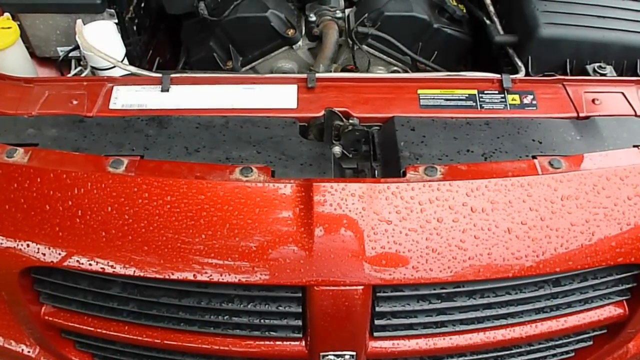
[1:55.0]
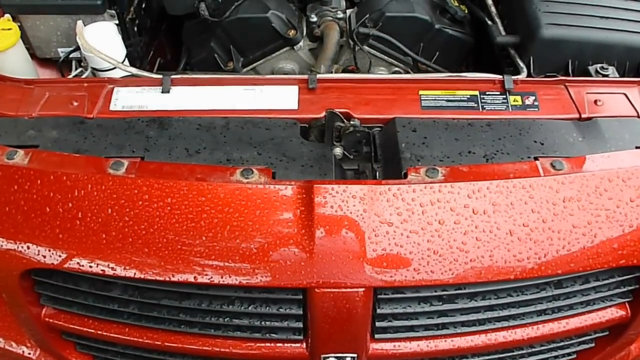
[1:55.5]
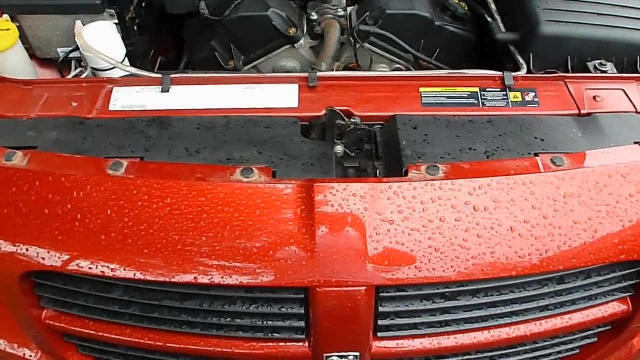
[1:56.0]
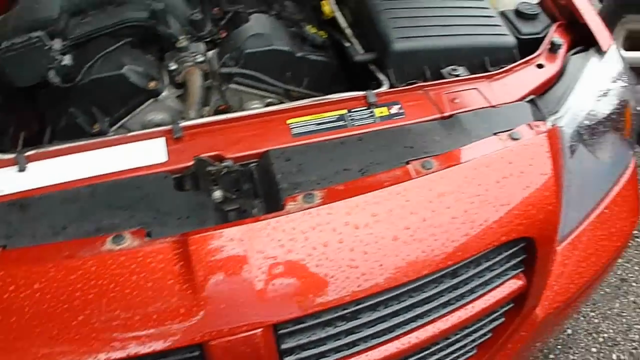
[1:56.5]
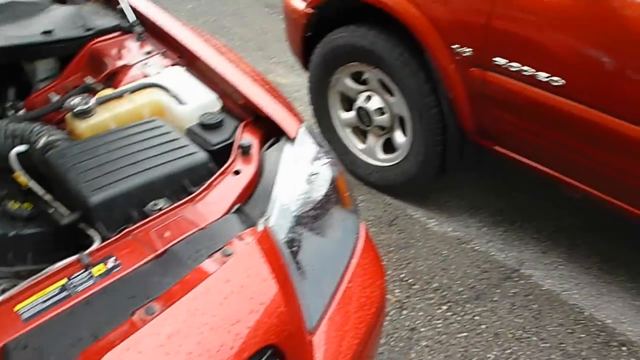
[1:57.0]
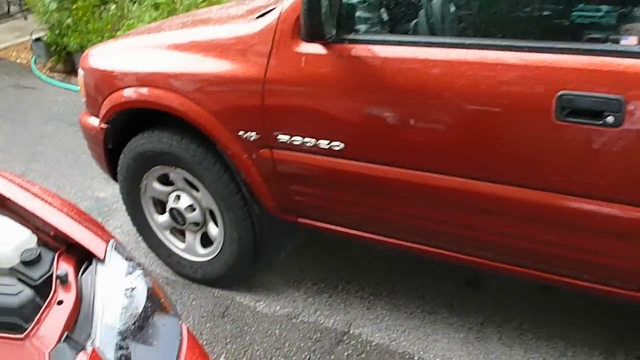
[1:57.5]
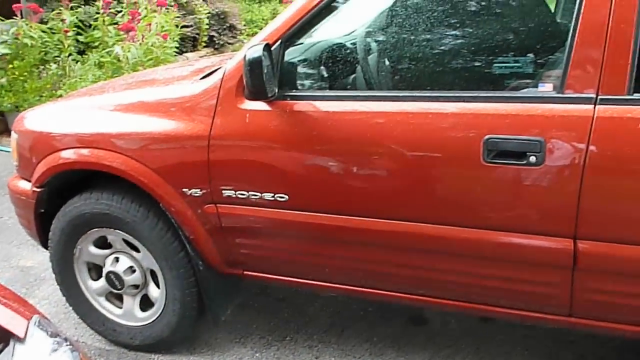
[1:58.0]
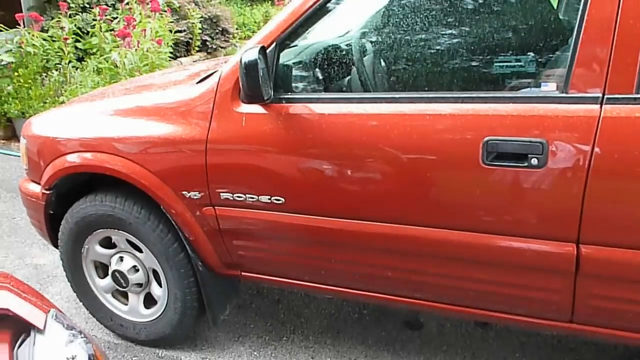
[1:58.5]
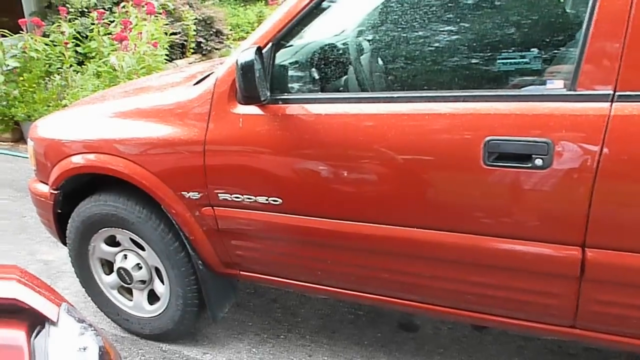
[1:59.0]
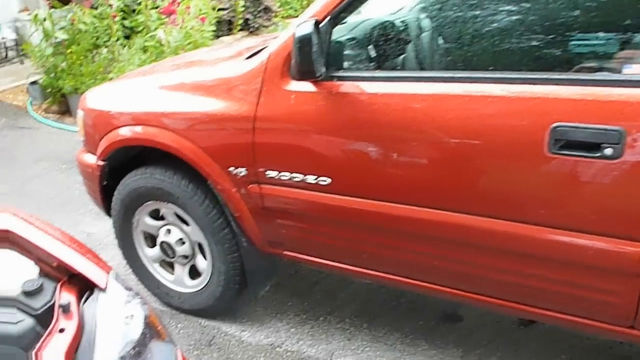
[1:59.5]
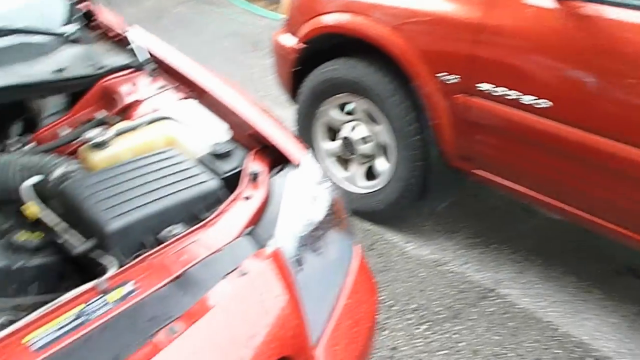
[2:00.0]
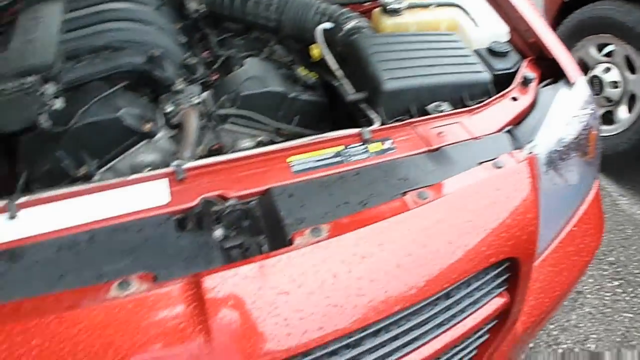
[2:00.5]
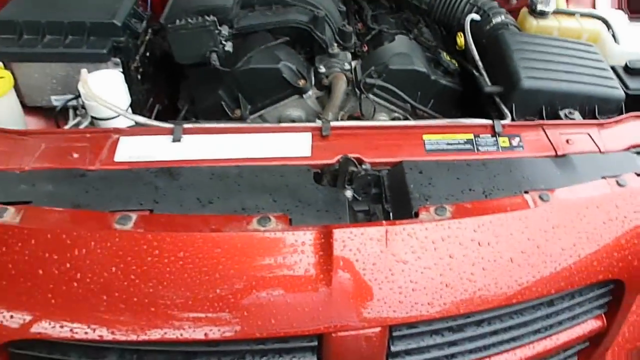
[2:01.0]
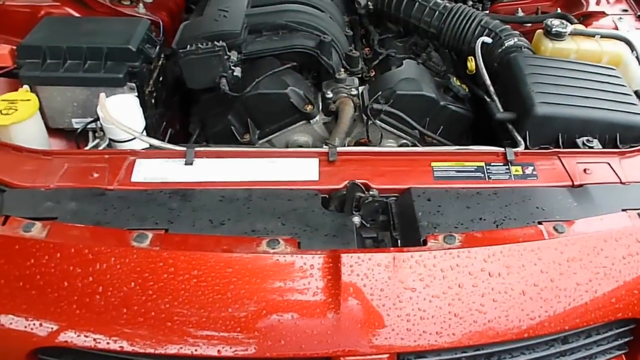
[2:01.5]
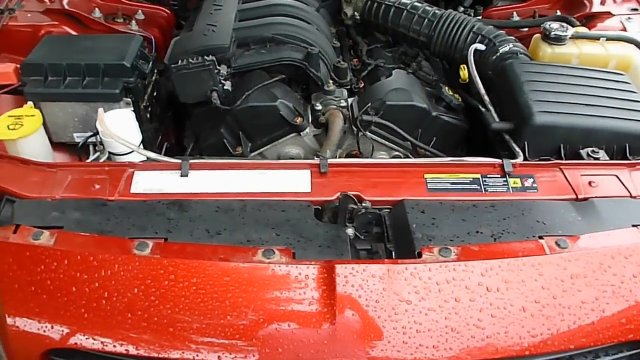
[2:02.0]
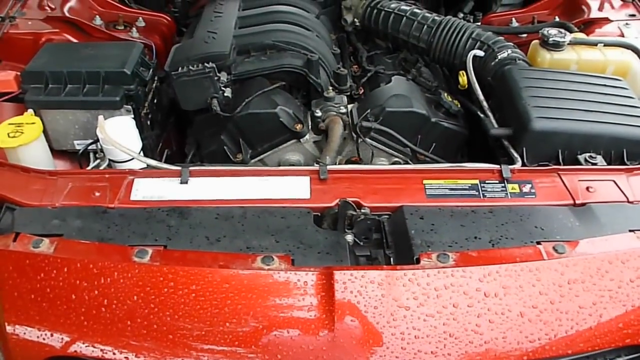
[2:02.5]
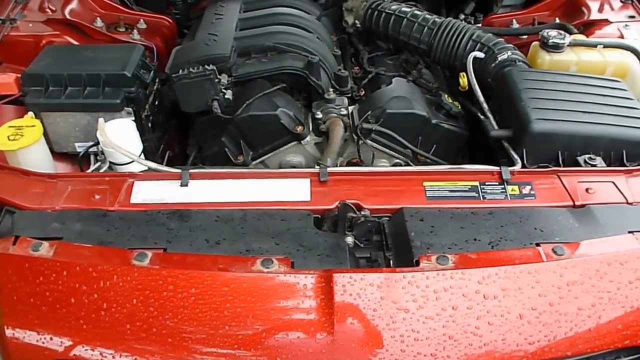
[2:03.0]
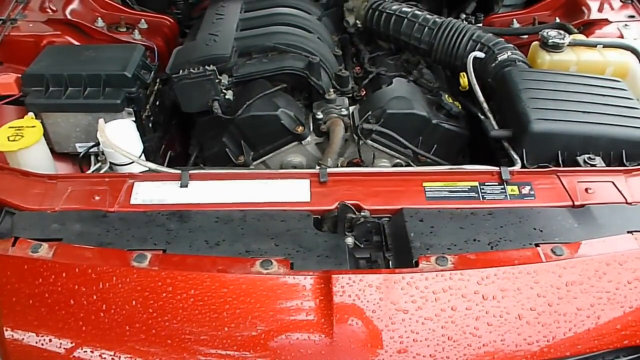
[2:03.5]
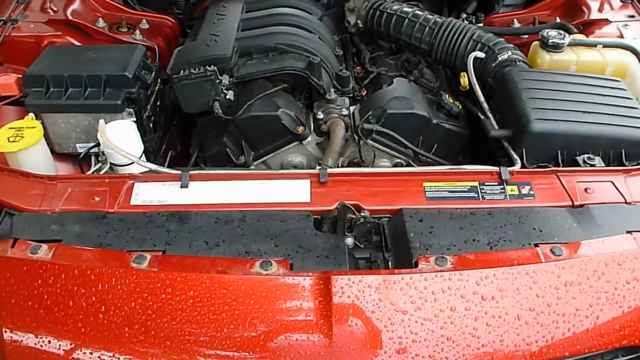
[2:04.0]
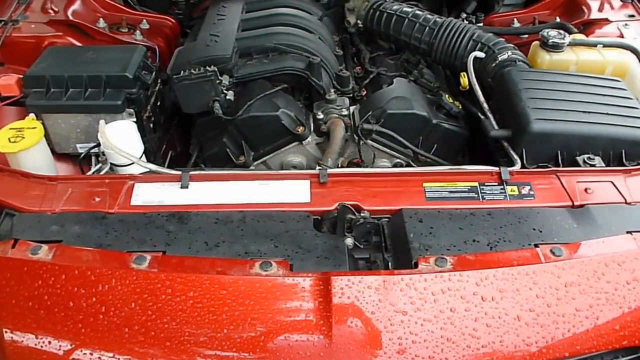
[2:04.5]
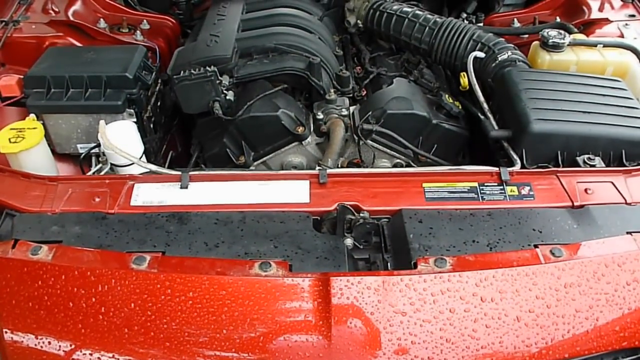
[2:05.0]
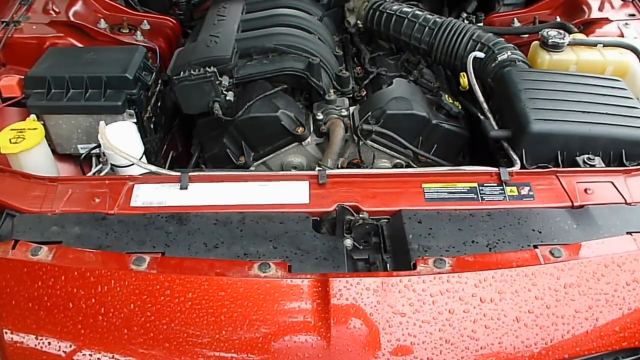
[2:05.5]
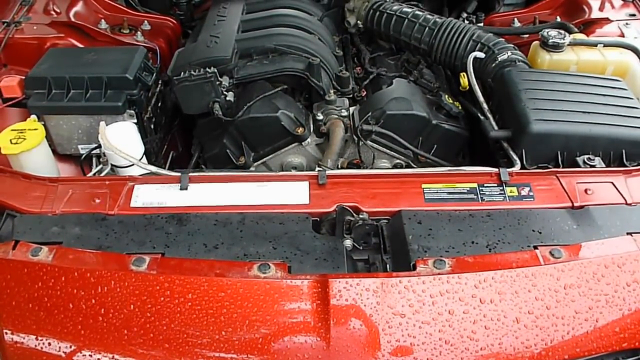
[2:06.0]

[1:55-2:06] From the more or less static shot of the front of the car, the man quickly rotates 45 degrees to his right, showing another similarly colored vehicle, a Rodeo, which looks like maybe a compact SUV or maybe a truck; only its front half is seen. The camera rests on it for a second or two, with a lot of distortion and lens wobble, before snapping back to the front of the car, this time showing much more of the interior of the engine compartment. No mechanical work or tools are shown at any point.